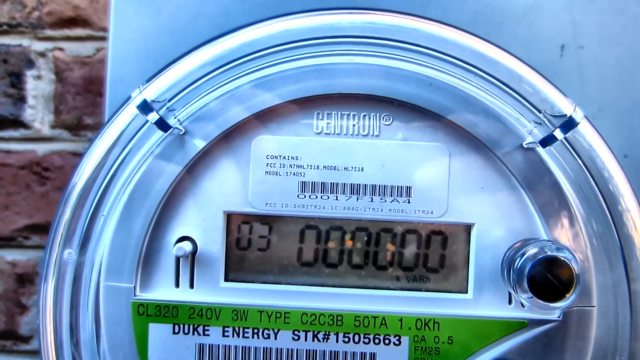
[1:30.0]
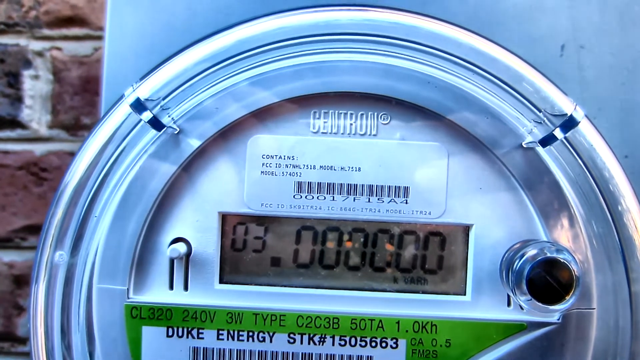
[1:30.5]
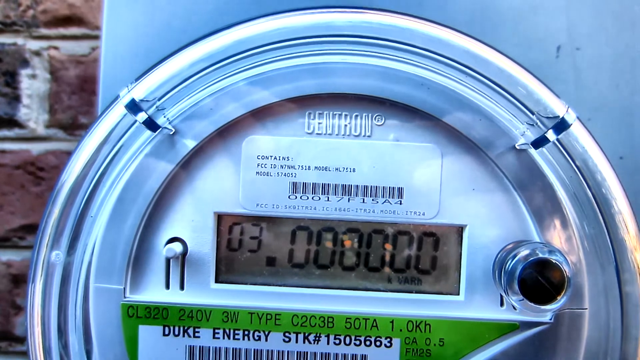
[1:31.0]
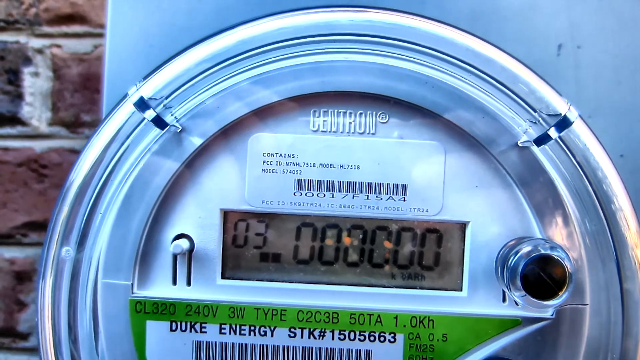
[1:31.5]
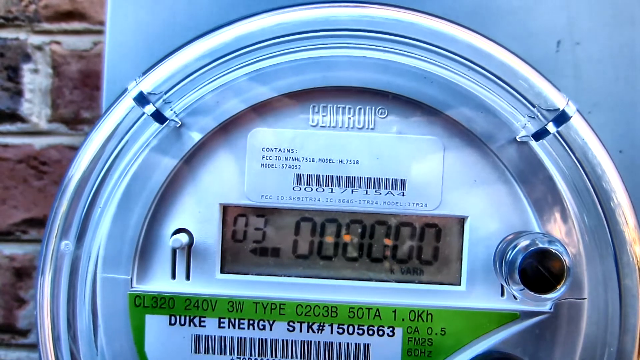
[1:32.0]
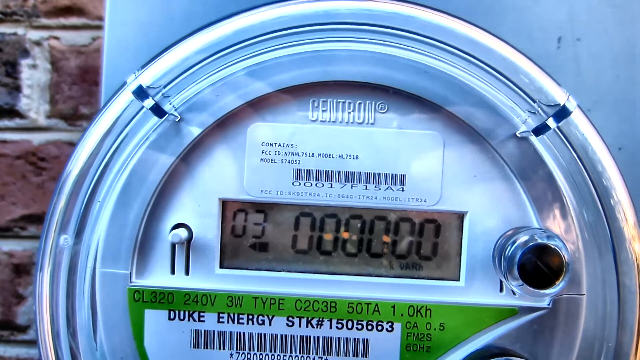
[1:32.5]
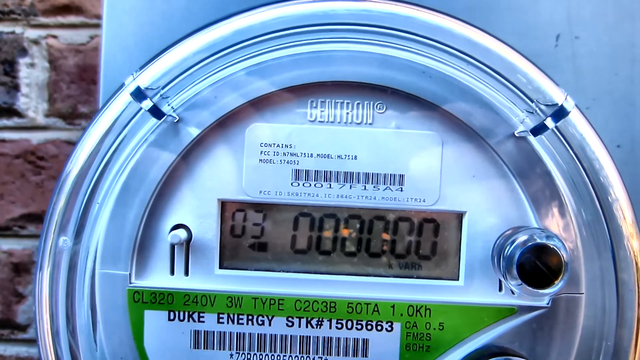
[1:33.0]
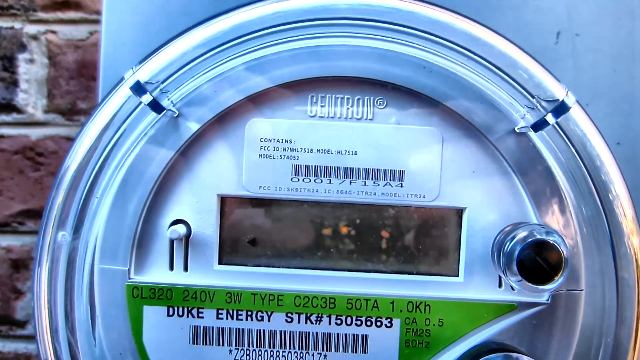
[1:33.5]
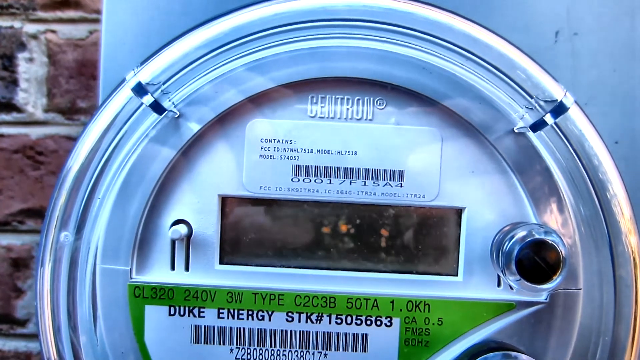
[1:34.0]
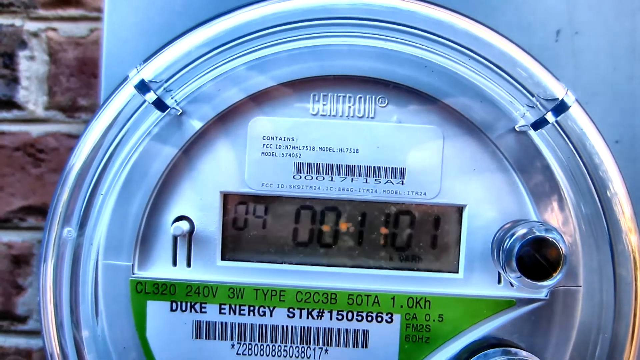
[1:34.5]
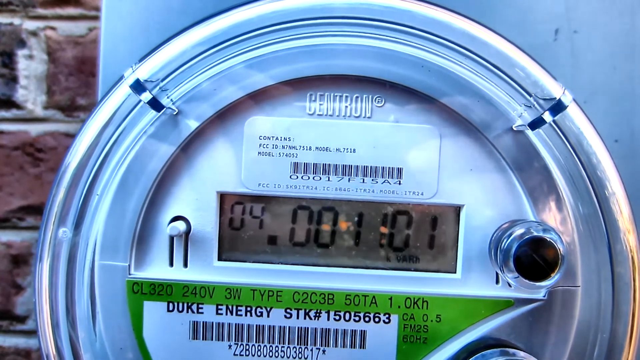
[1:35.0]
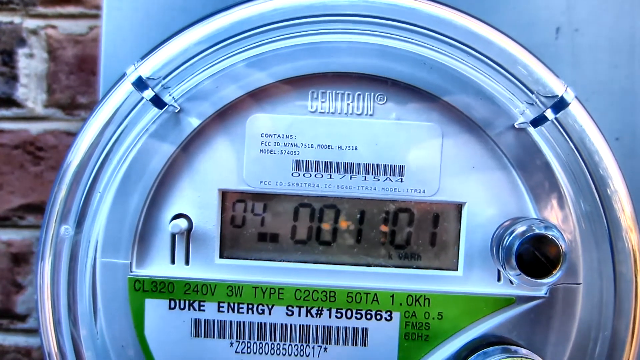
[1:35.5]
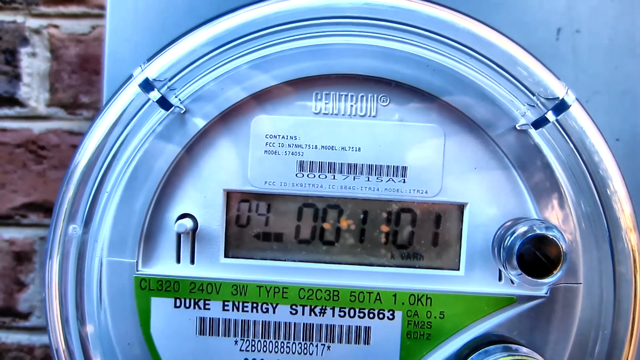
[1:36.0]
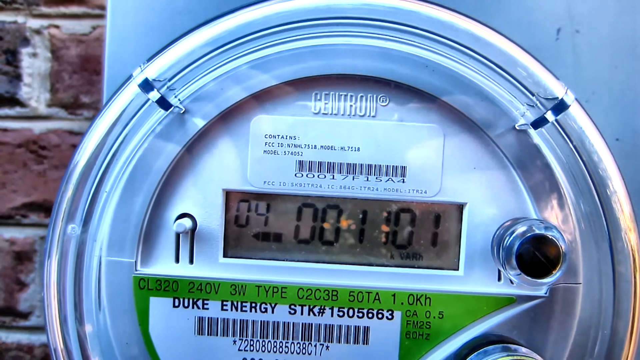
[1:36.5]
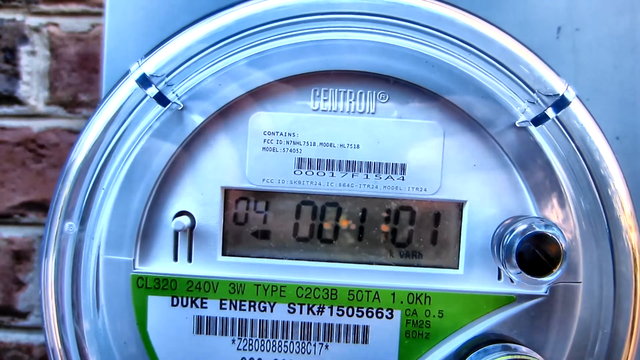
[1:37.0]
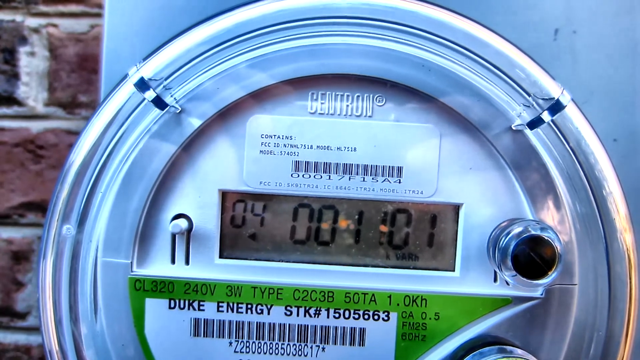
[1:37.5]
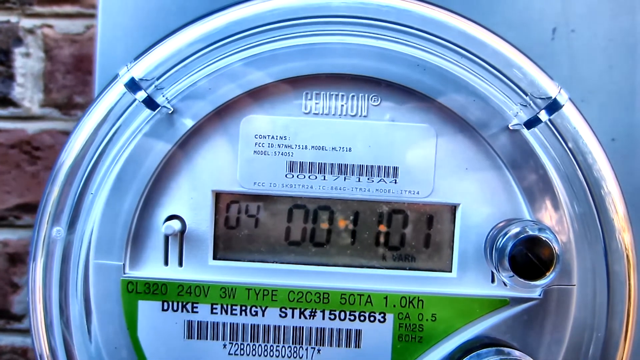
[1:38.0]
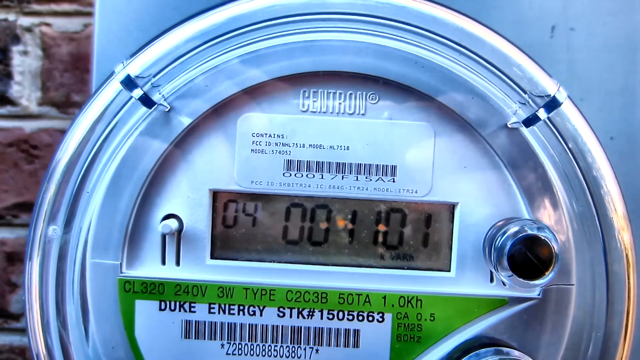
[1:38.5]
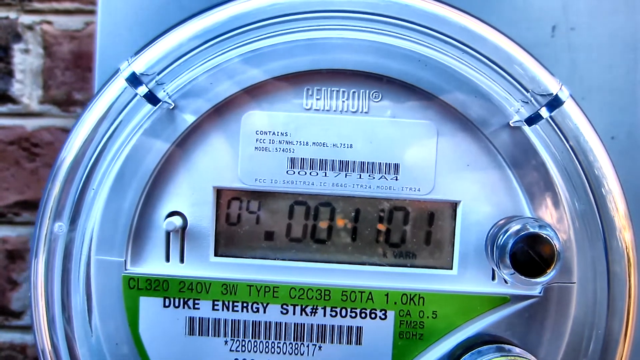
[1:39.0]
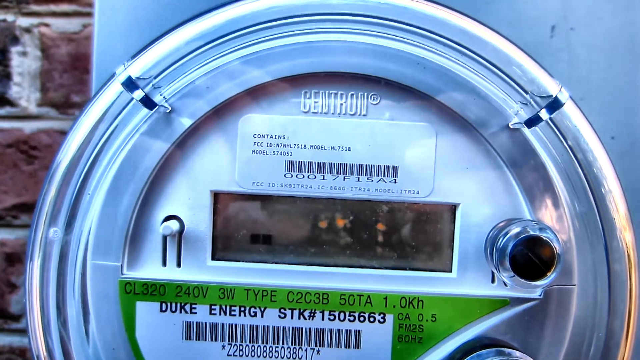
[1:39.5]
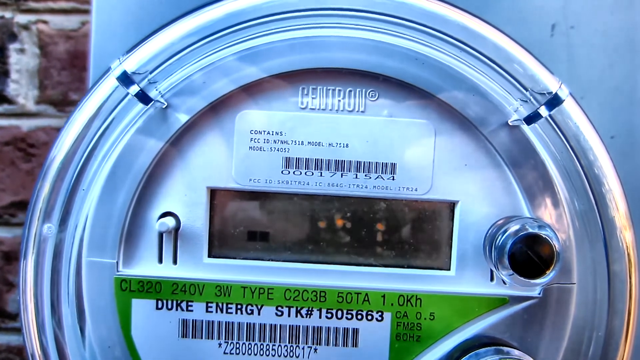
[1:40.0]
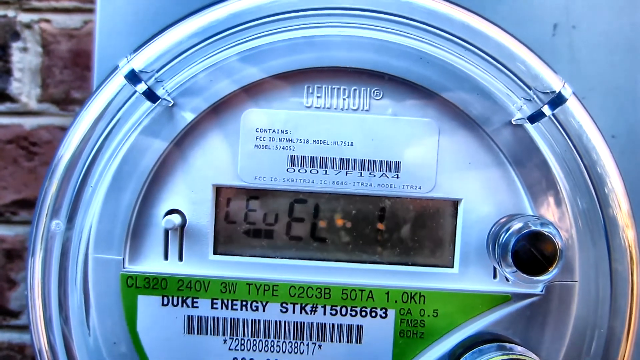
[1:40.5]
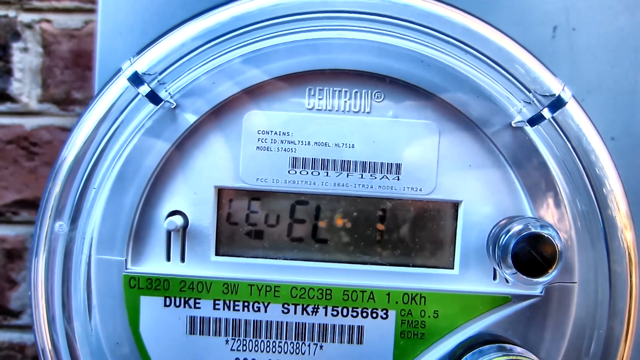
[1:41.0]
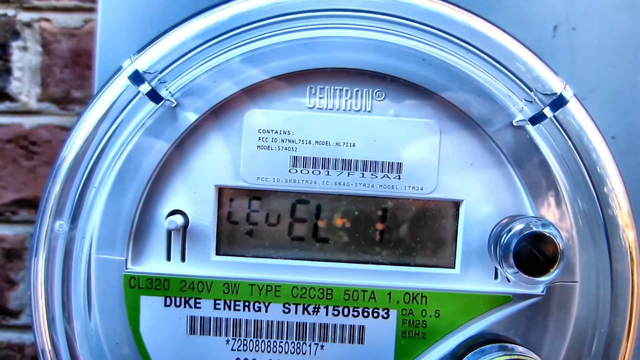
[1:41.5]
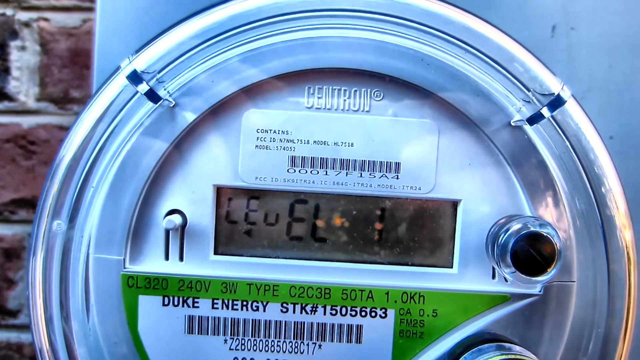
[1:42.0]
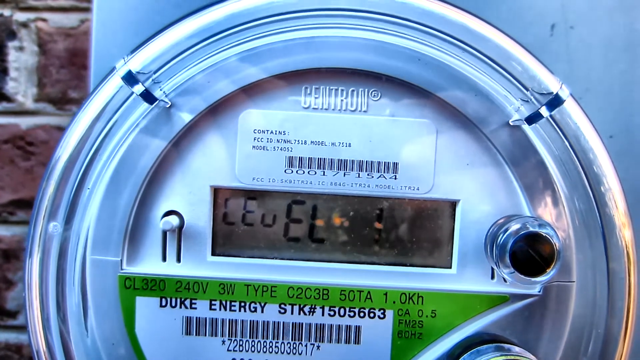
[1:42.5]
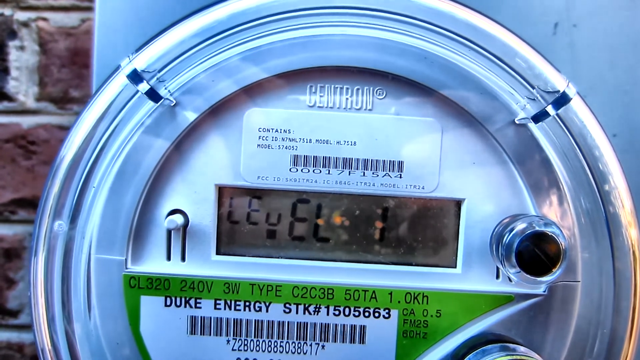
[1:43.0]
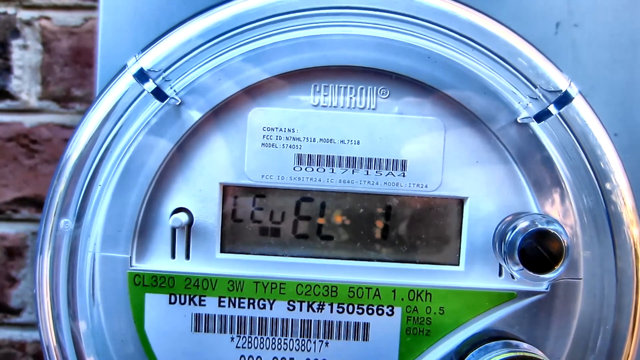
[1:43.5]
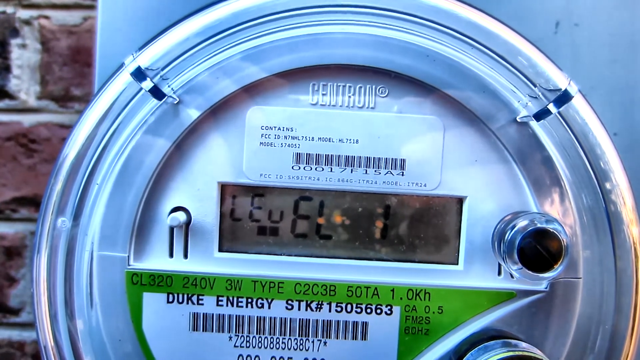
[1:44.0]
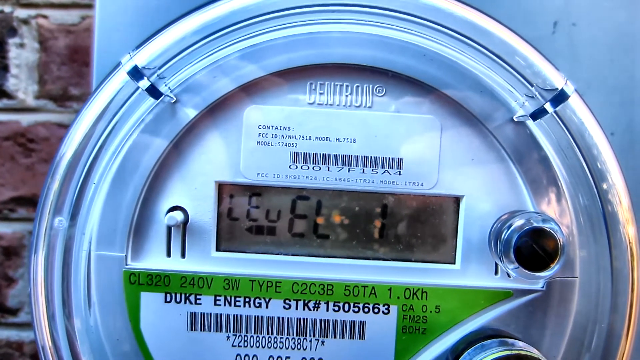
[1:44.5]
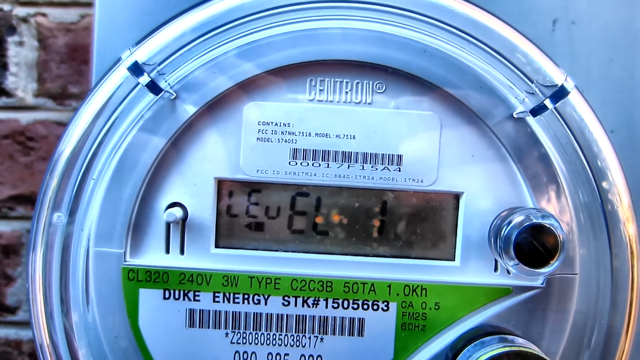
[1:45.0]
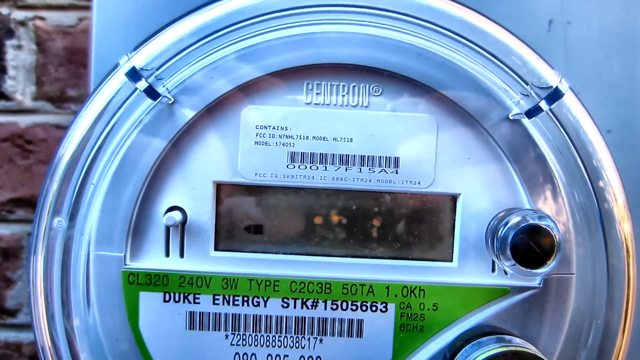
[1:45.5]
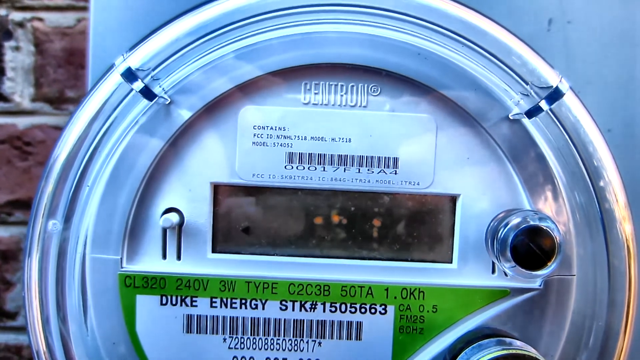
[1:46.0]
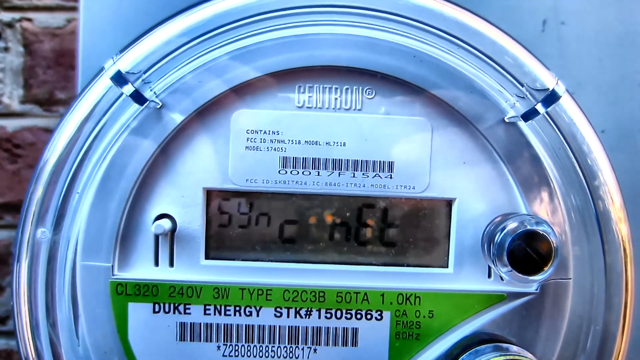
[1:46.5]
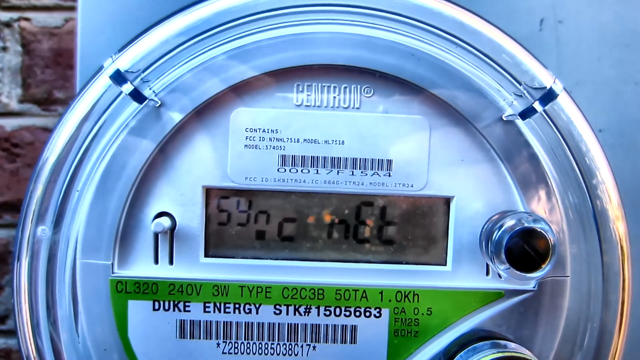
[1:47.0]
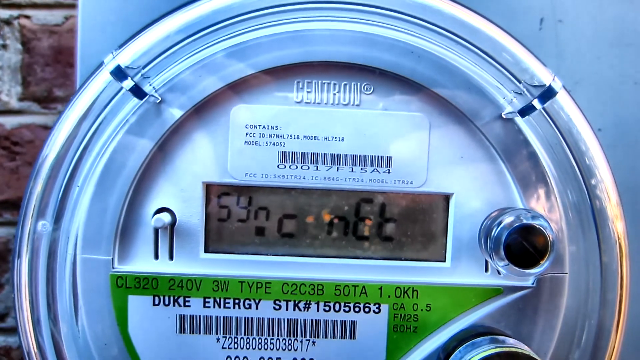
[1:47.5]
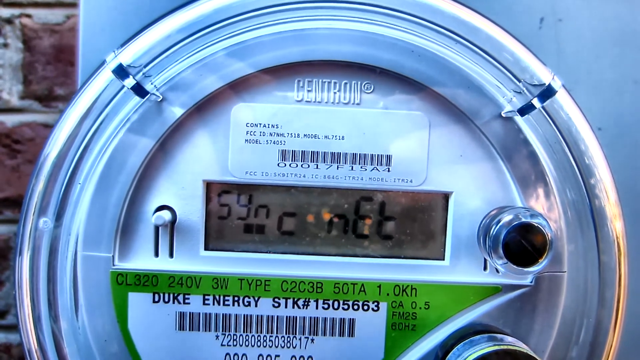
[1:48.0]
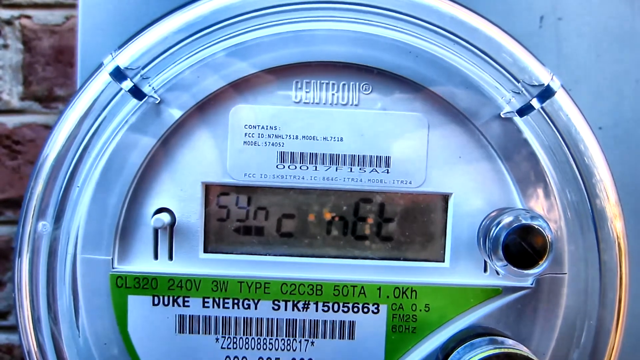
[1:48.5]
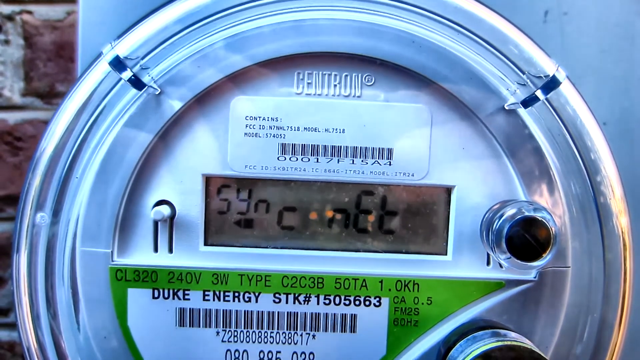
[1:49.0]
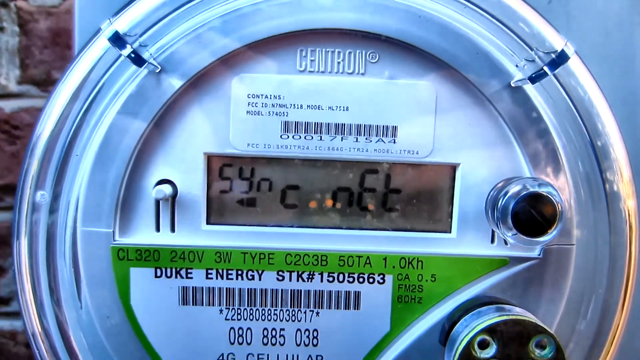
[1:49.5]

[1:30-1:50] The camera stays focused on the silver metallic meter. The rectangle in the middle displays six zeros, goes blank, shows "001101", goes blank again, and then appears to say "level" in weird writing, followed by "sink" and "net" in weird writing. The view then cuts to a close-up of the green and white sticker below it, which says "Duke energy" in a white rectangle with a barcode underneath; above are black letters and numbers indicating 240 volts. The camera pans in underneath the barcode, showing the numbers "080 885 038" and, below them, "4G CELLULAR".